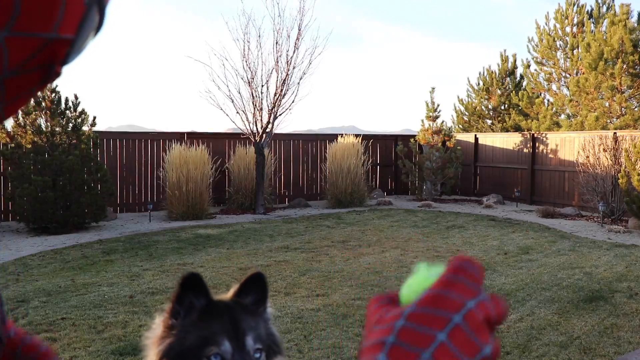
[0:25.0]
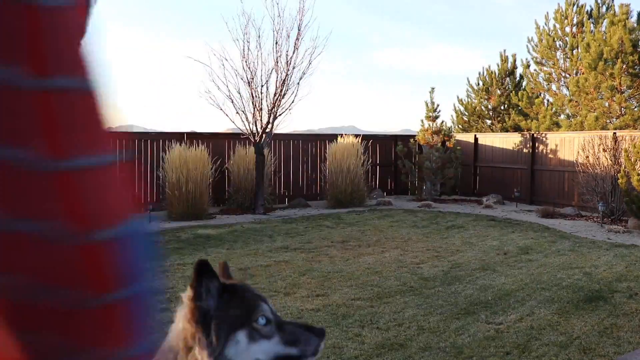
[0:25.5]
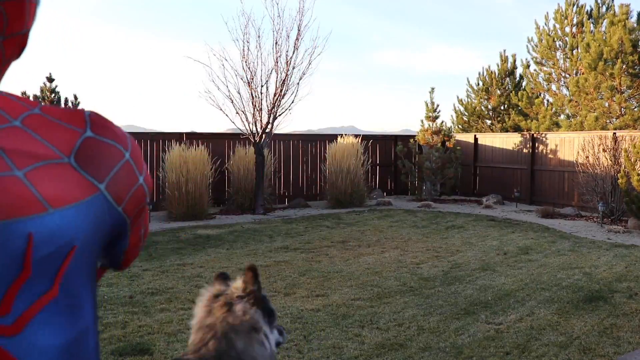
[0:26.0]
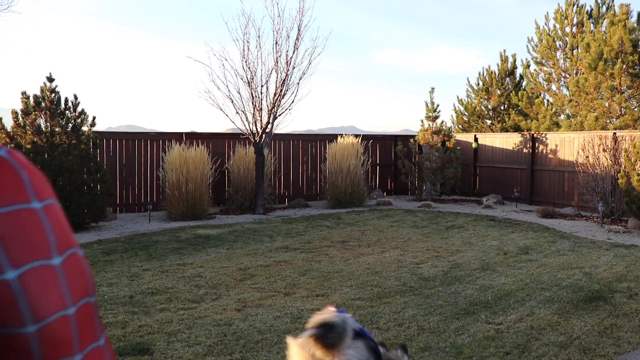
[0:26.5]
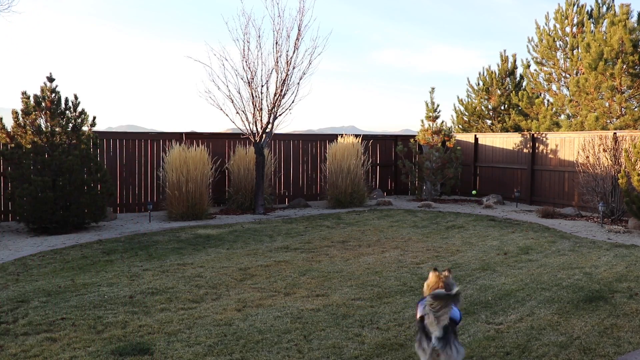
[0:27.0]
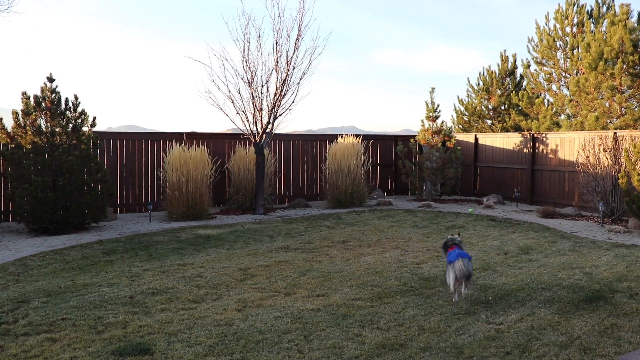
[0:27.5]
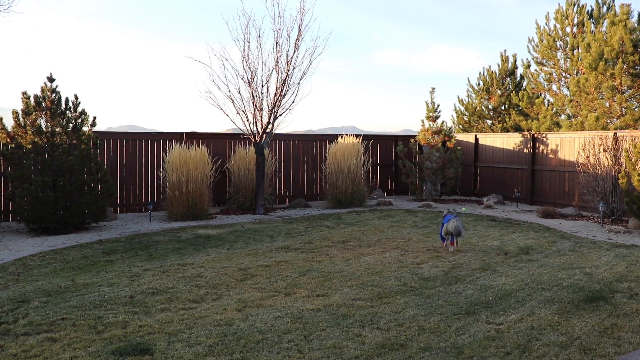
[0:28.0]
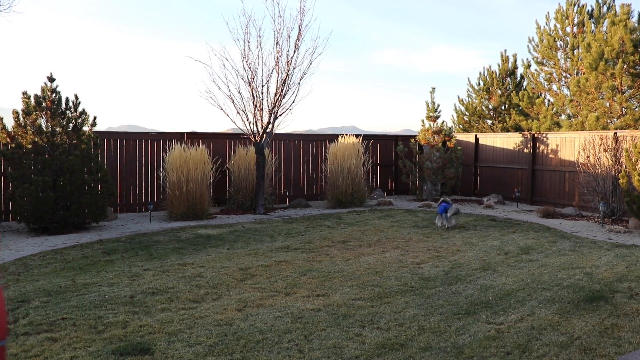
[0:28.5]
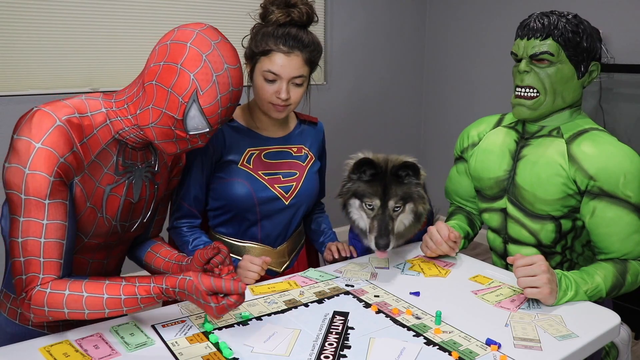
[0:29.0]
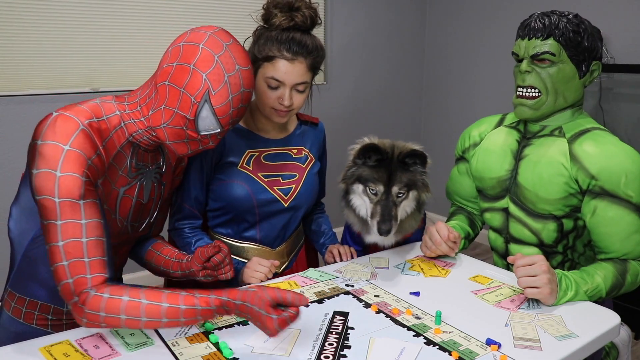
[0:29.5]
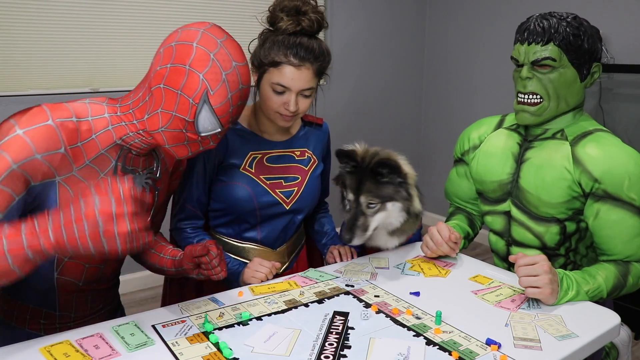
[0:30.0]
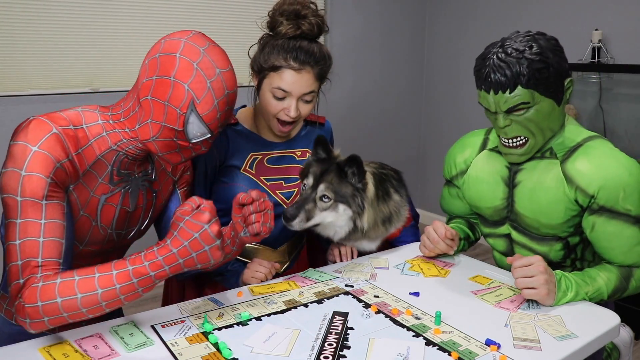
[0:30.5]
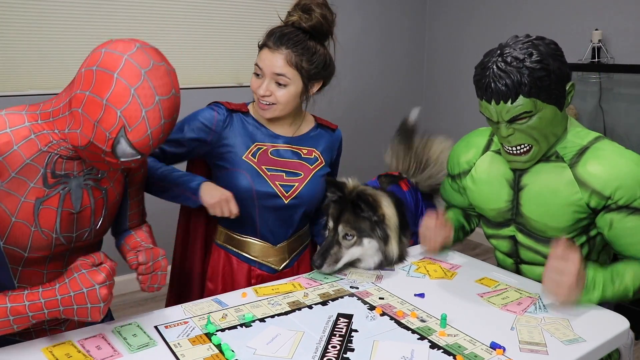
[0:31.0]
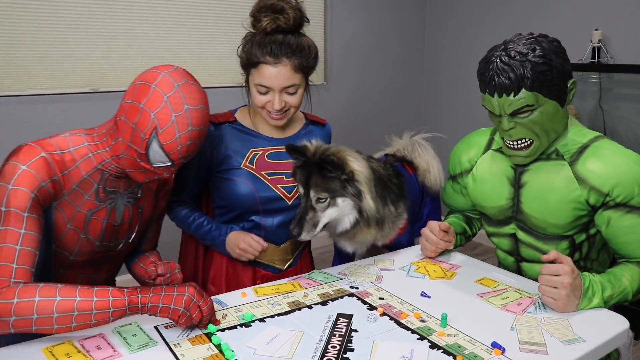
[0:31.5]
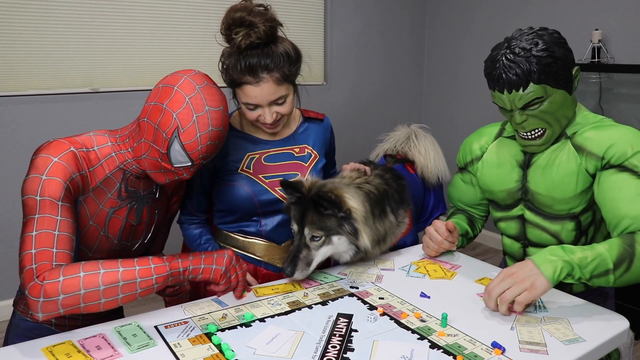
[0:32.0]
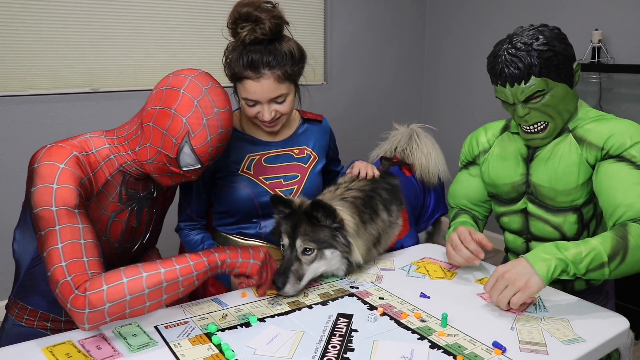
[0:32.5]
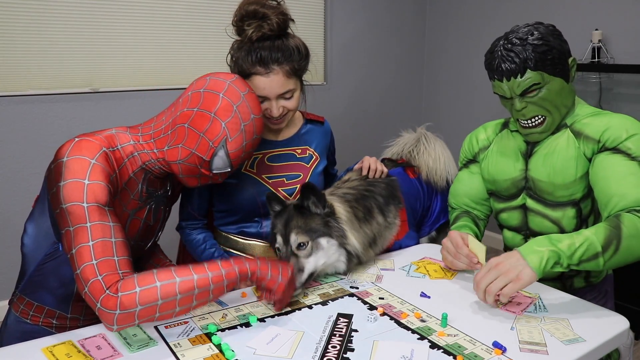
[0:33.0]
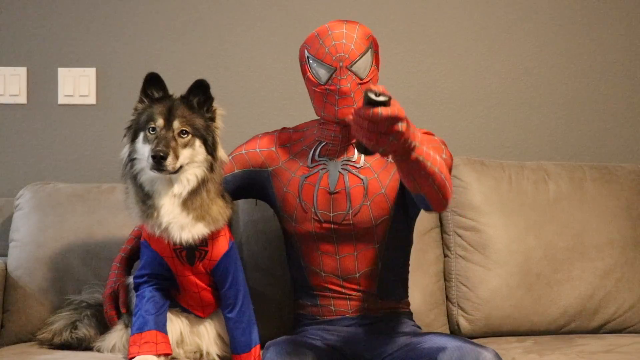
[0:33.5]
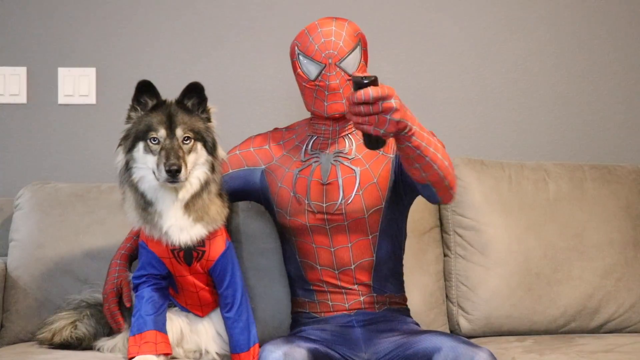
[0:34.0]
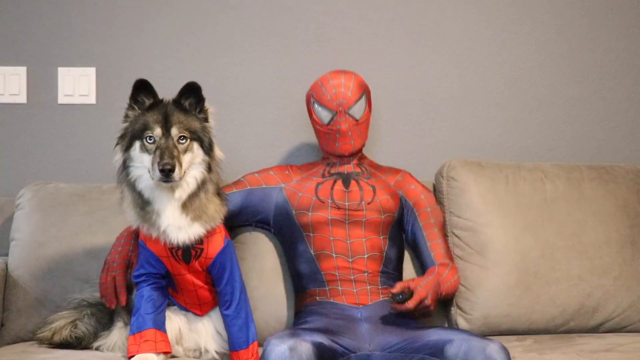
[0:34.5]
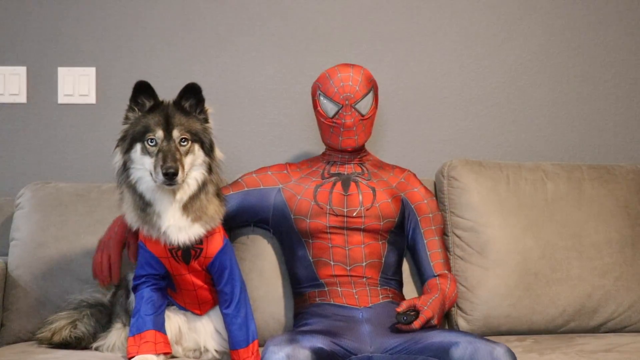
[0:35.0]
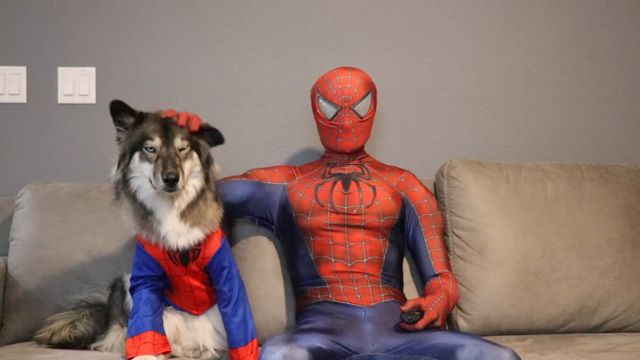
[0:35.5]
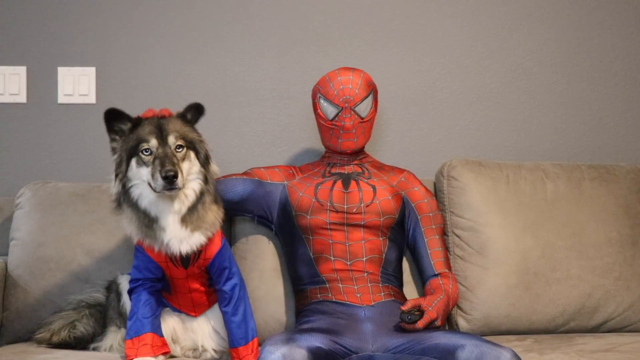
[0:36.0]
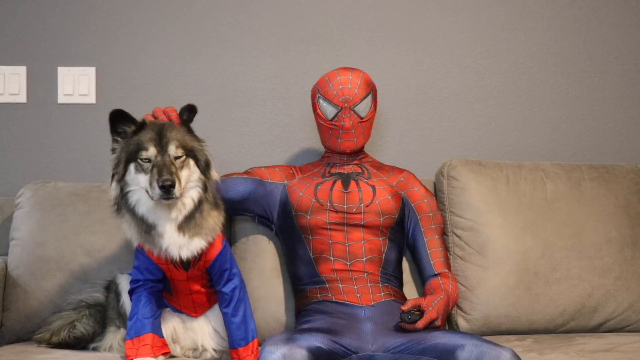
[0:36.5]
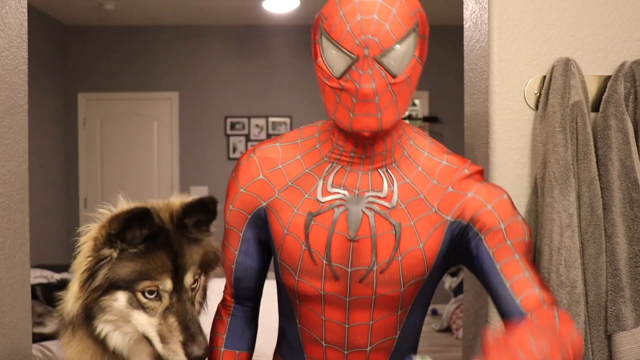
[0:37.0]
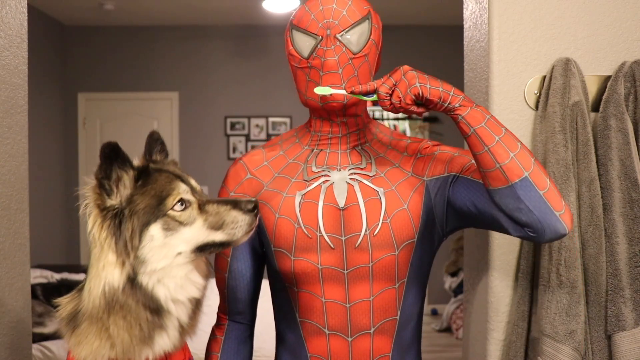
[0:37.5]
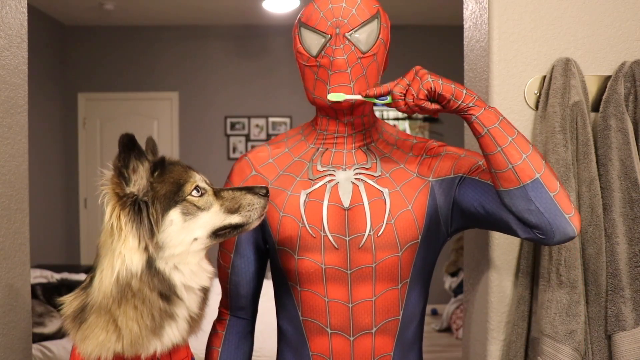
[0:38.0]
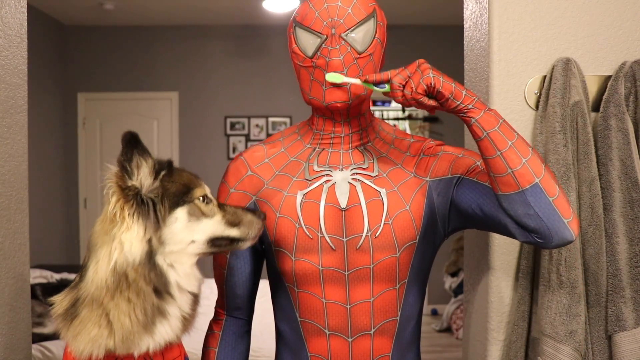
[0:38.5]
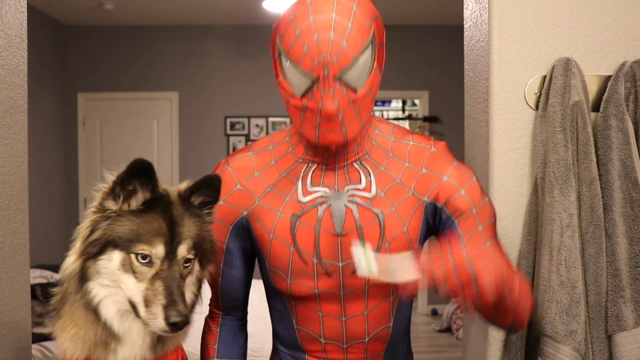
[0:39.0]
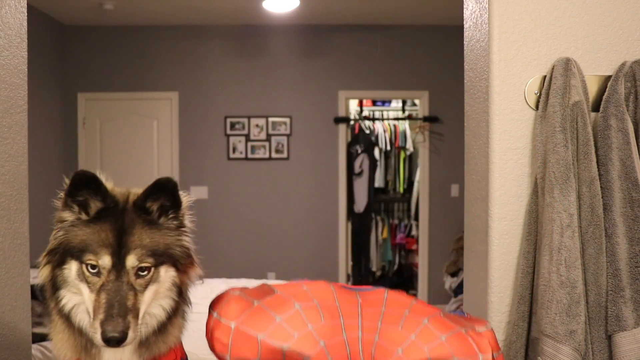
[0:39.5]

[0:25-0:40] The title "The Life of Spider-Dog" appears again, then the view pans over to Spider-Man and Spider-Dog in the backyard, where he throws a tennis ball and the dog runs to fetch it. Next, Spider-Man sits at a table with Supergirl and the Hulk playing a game of Monopoly. Spider-Dog sits between Supergirl and the Hulk, very interested in the game, sniffing the board as Spider-Man moves his token. When he rolls the dice, Spider-Man shakes his fists in the air and counts the spaces. The video once again pans to Spider-Man brushing his teeth and then the dog's teeth. It also shows Spider-Man and the dog sitting on a couch watching TV while Spider-Man clicks the clicker to change the channel.